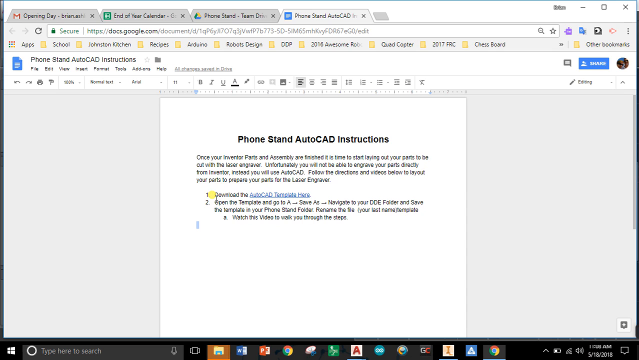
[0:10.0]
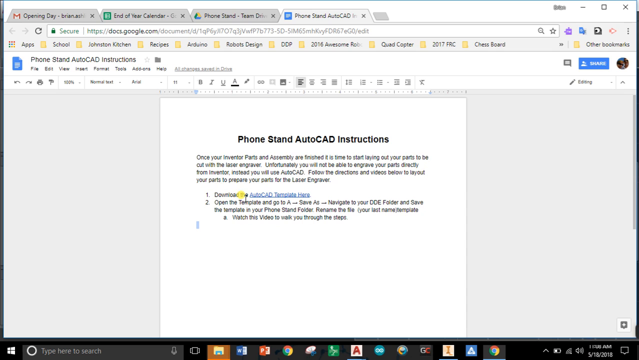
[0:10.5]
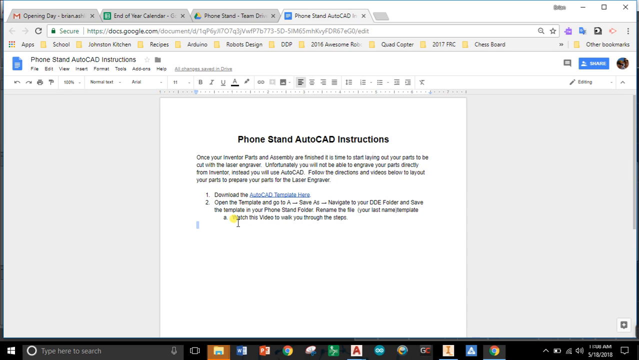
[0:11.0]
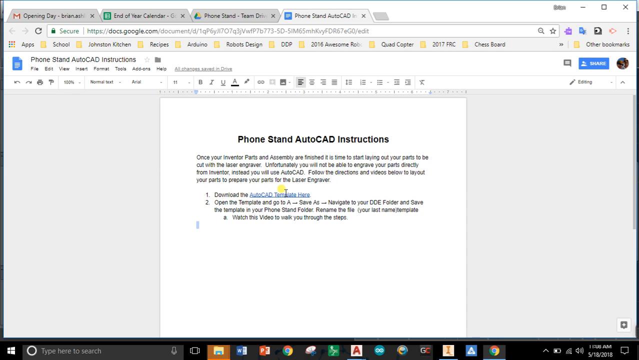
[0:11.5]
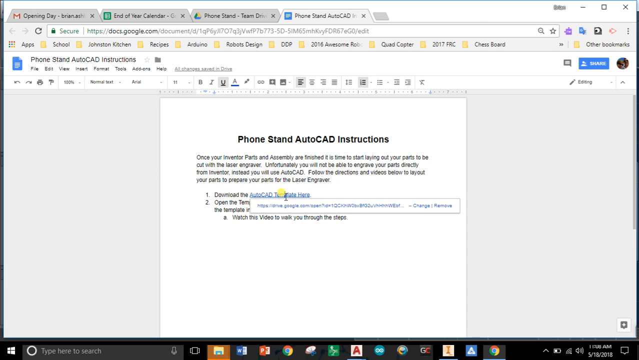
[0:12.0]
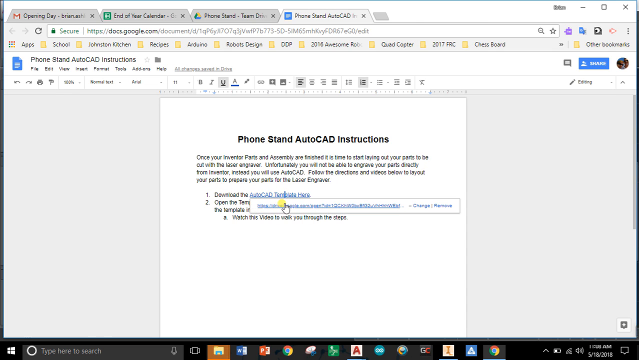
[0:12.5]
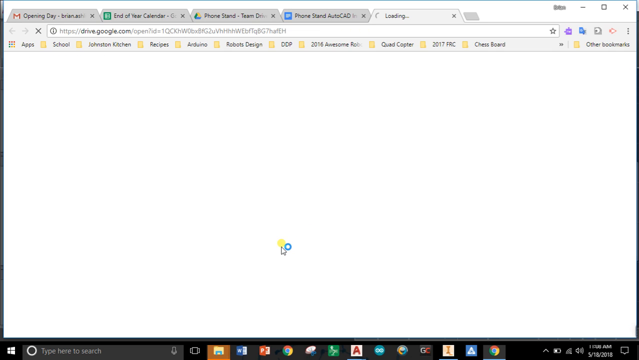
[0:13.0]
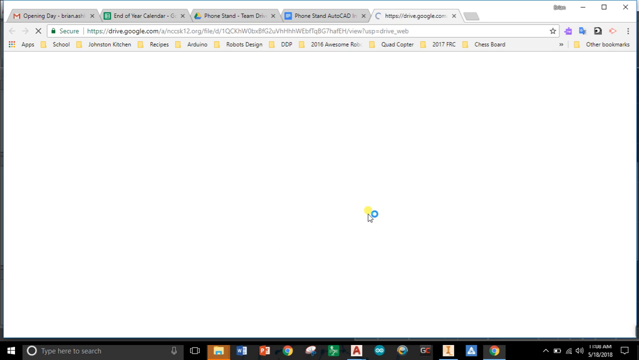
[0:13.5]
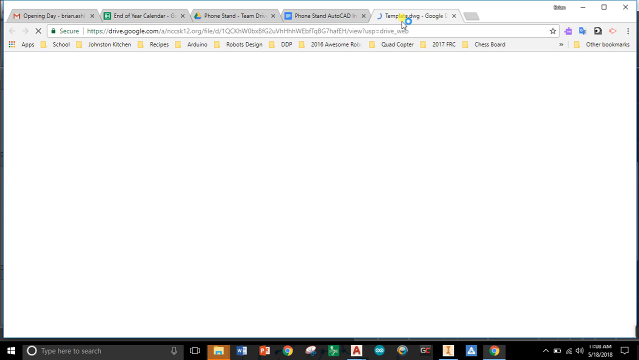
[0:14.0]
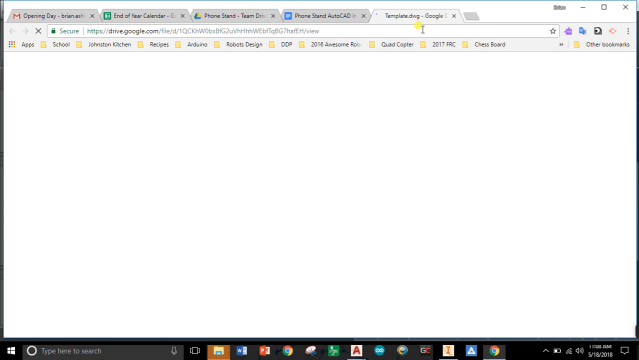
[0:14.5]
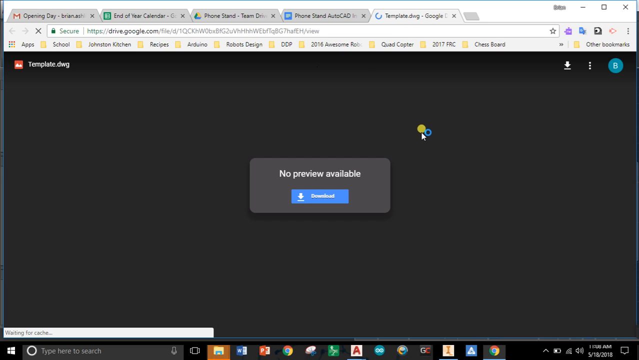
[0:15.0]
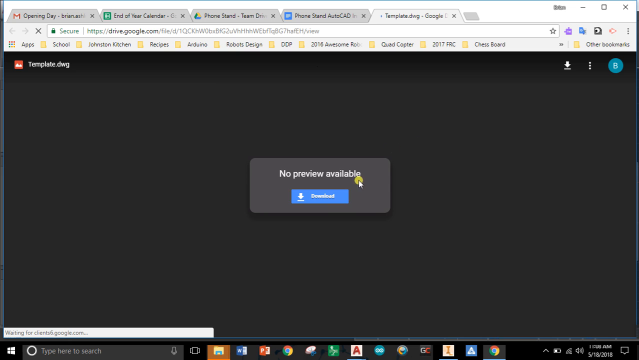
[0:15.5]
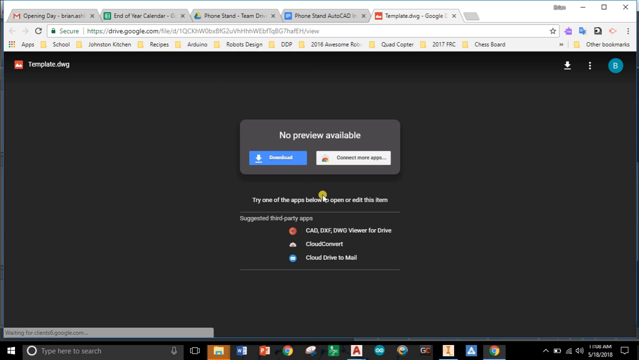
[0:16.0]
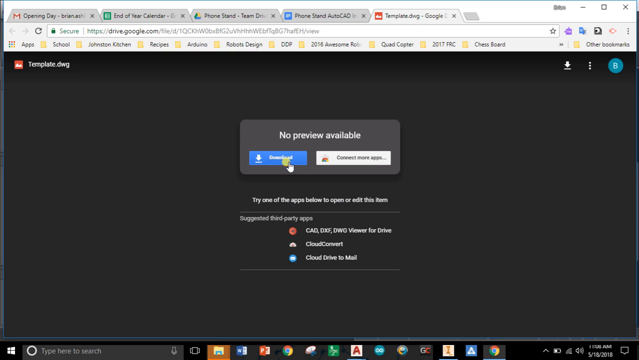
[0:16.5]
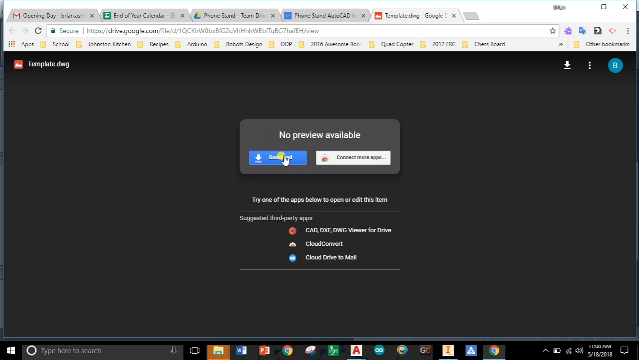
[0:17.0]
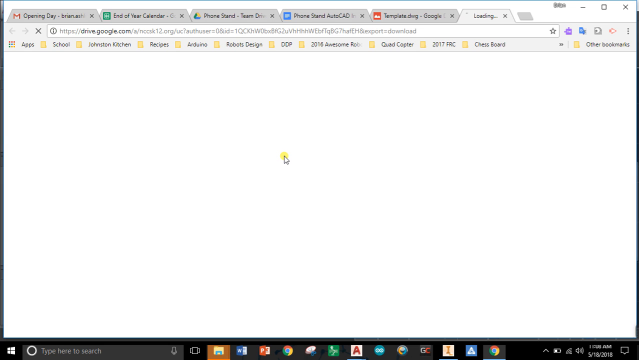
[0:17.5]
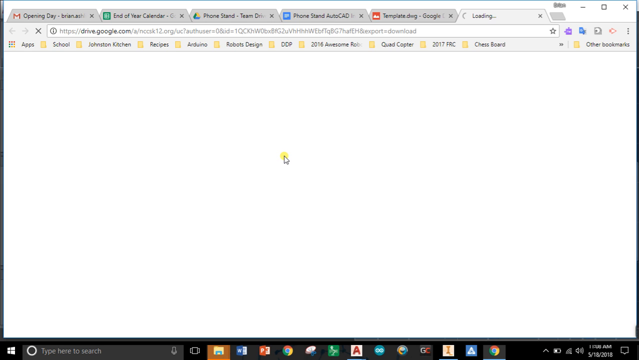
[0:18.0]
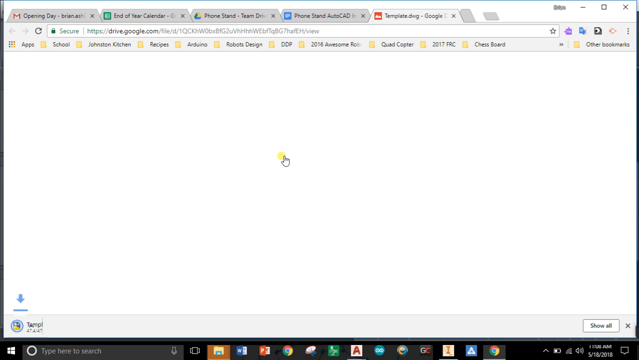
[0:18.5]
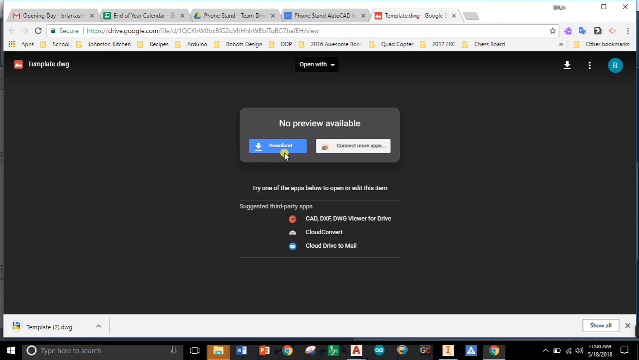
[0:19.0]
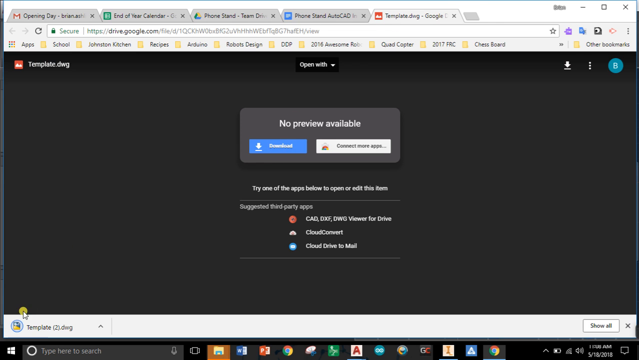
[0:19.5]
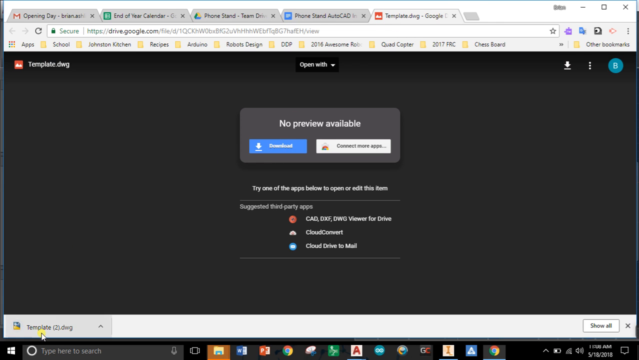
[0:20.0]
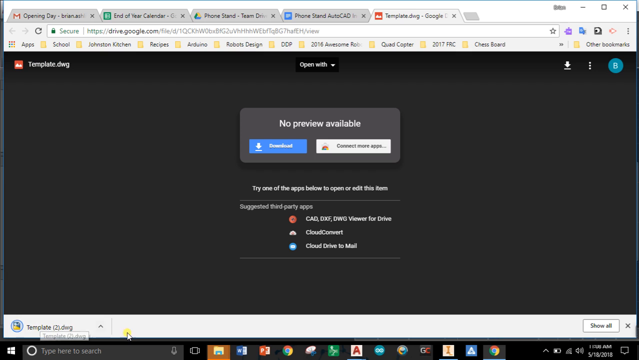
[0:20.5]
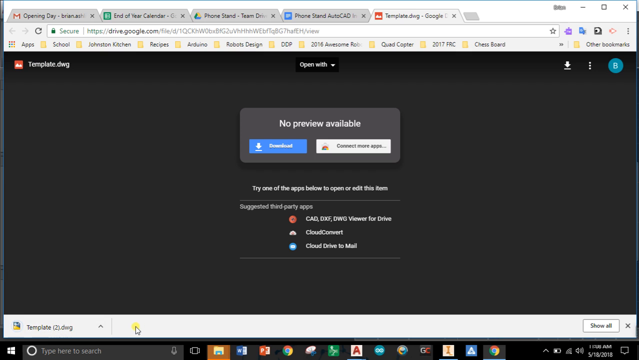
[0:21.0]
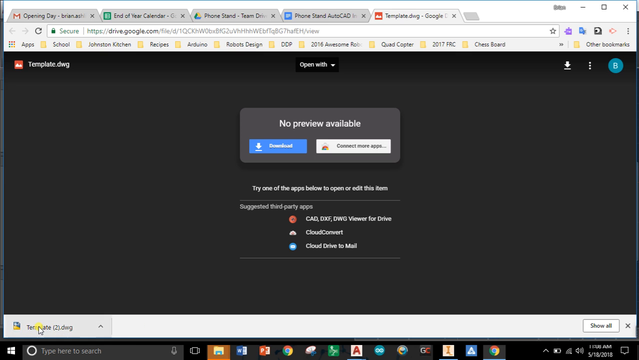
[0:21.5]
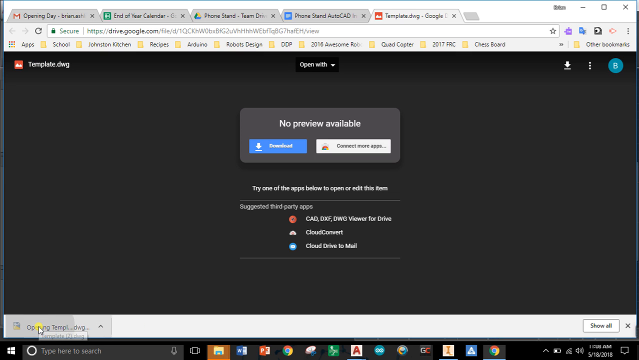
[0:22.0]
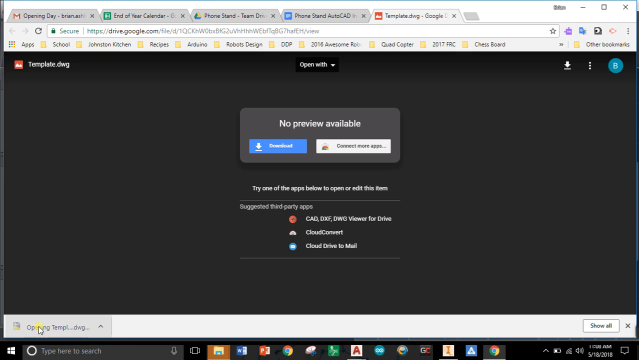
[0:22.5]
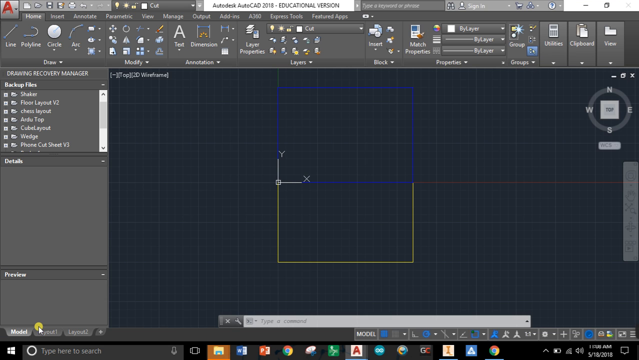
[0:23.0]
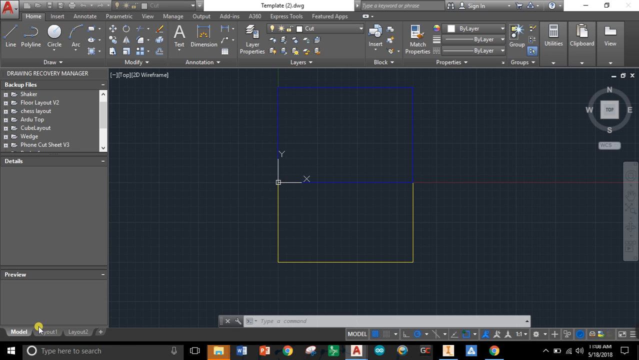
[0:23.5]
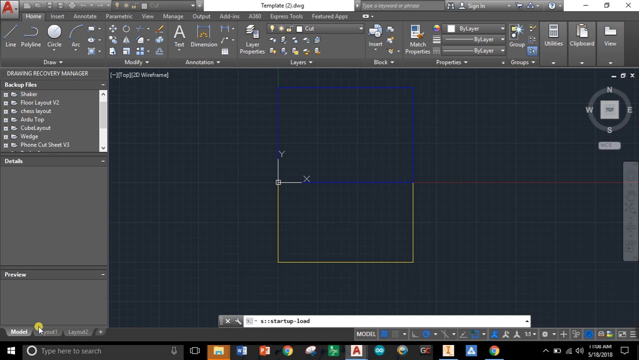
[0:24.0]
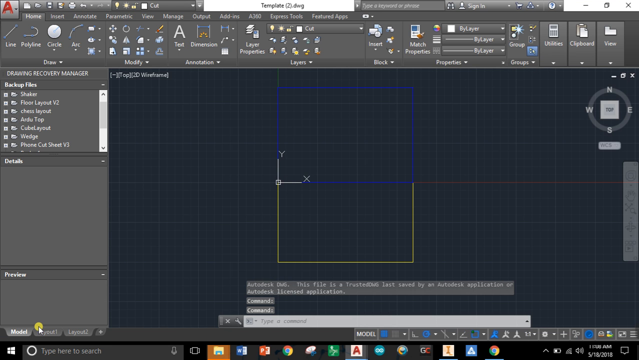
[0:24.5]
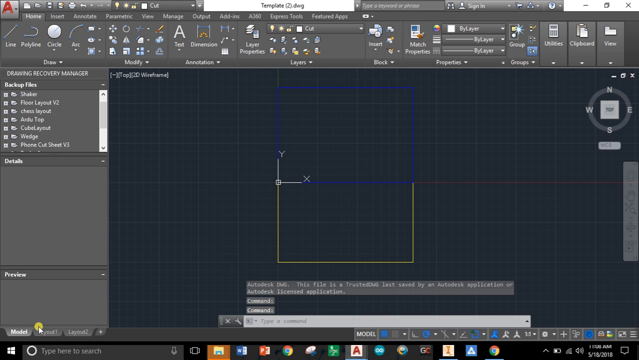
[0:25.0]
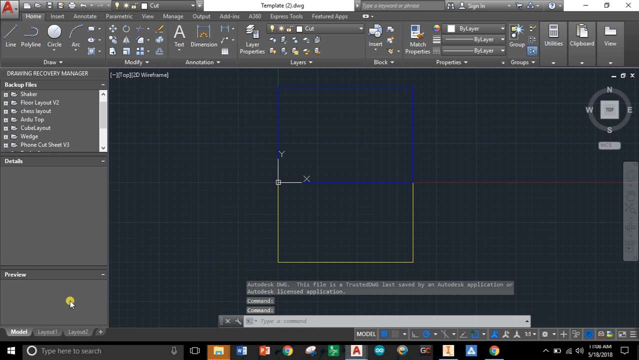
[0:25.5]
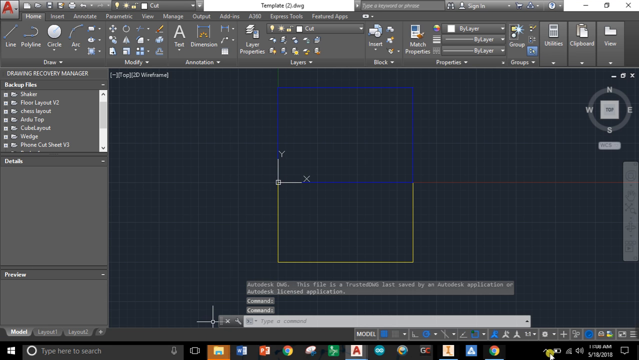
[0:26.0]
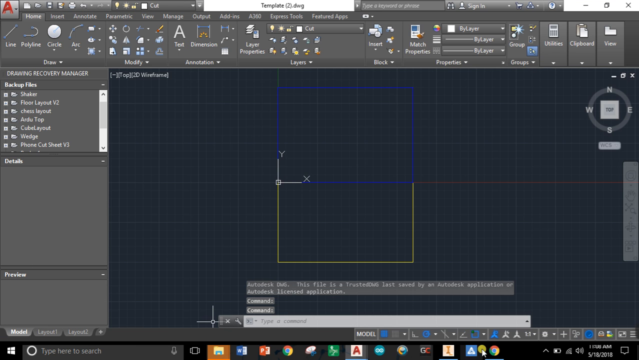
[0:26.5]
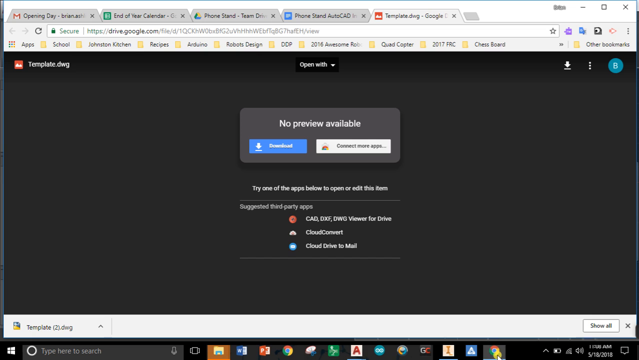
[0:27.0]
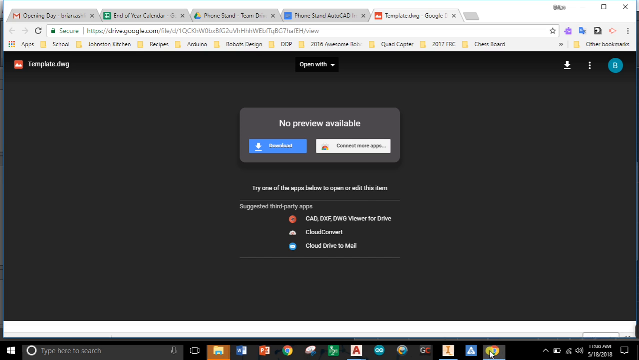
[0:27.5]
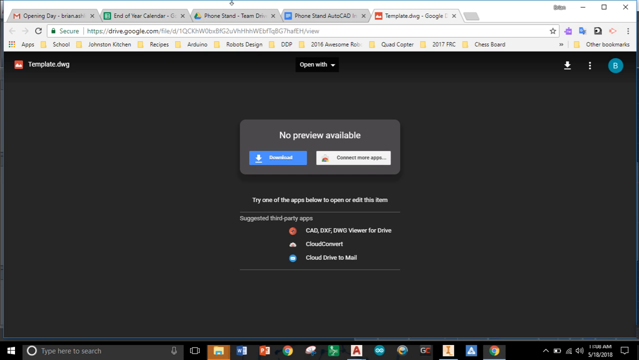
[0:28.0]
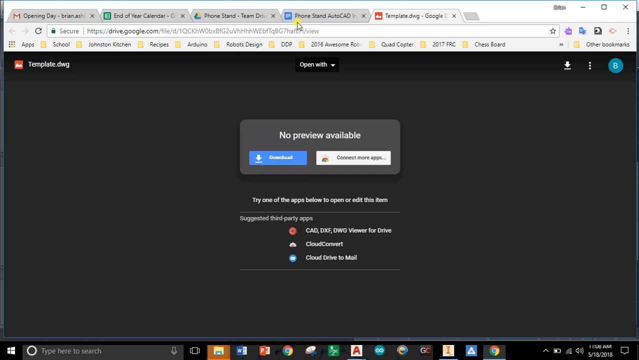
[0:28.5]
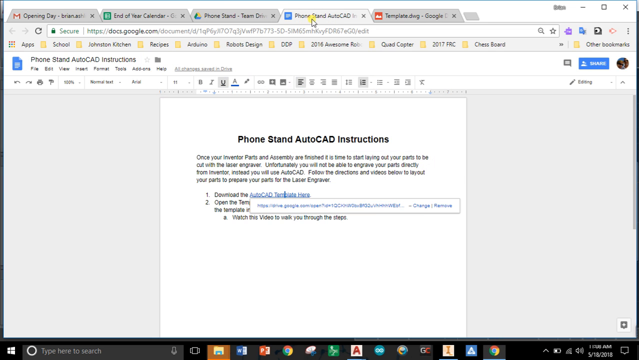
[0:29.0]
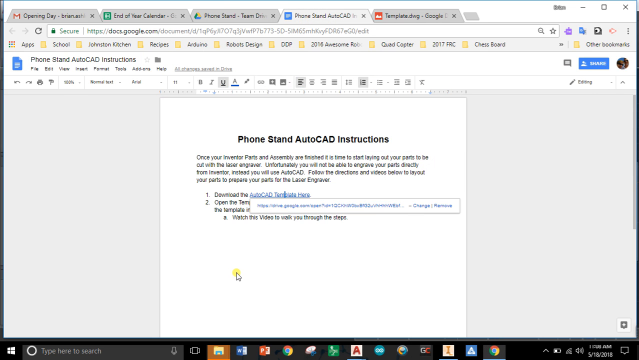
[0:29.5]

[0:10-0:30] The person goes through an embedded link in the document, clicking it to reach a Google Drive website, where they download something called "design.dwg". They open the file, and it apparently opens the AutoCAD program. After the program is open, they quickly exit and return to the original document. Throughout, they move relatively quickly. The downloaded file is called template, and they seem to be repeating a process they had already gone through before recording, having cleared the downloads pop-up. After opening the template in the AutoCAD software, they click back to the same document, where the embedded link expands to its full URL when highlighted. The shot ends with them highlighting the link that led to the Google Drive where the AutoCAD template was downloaded.